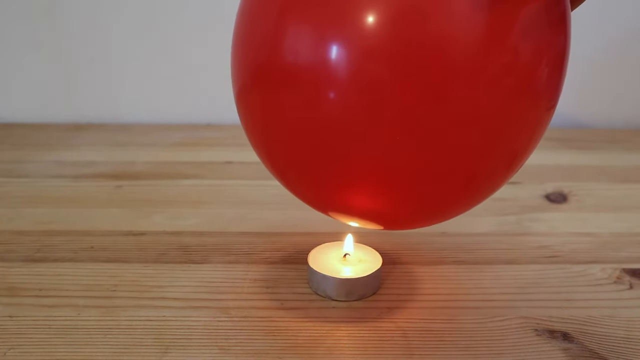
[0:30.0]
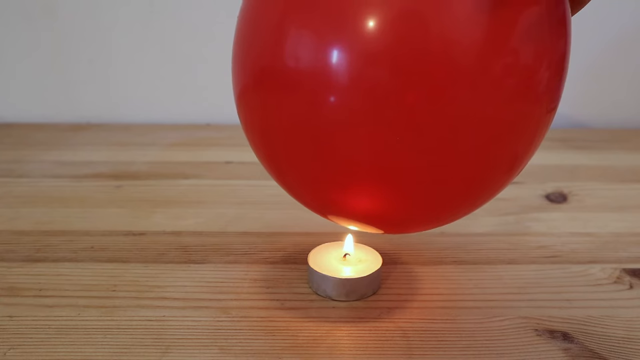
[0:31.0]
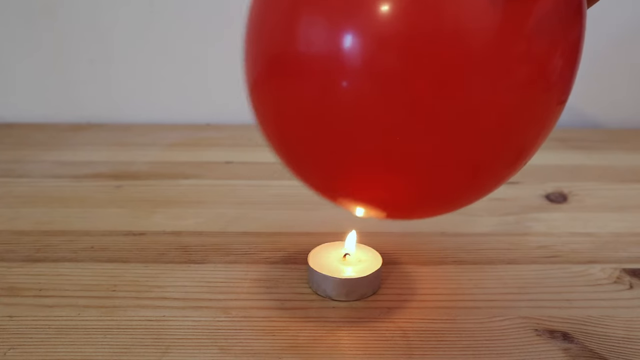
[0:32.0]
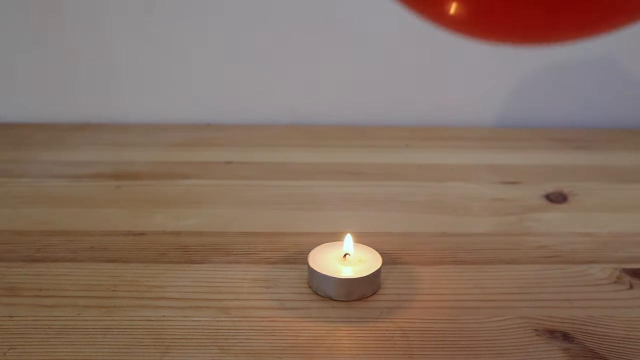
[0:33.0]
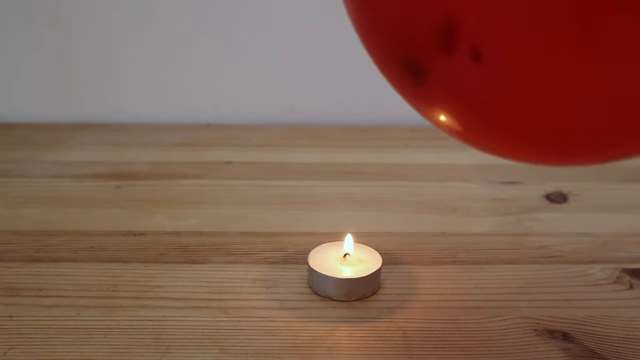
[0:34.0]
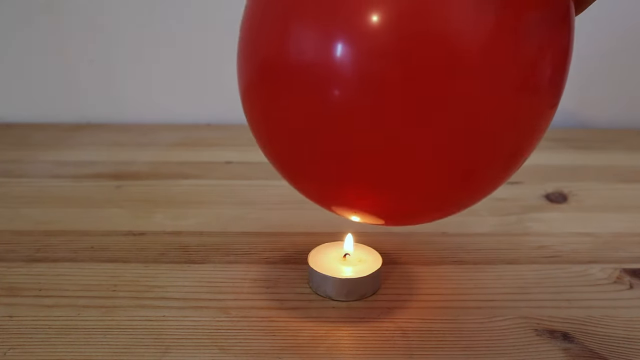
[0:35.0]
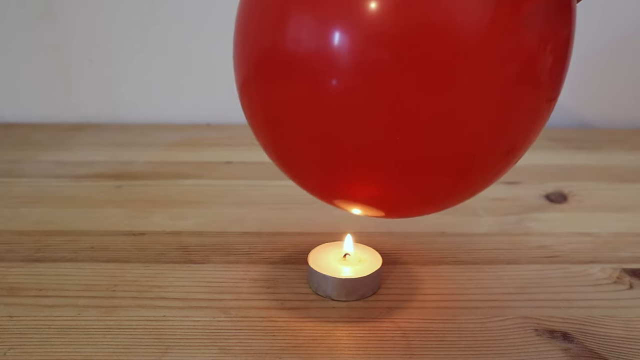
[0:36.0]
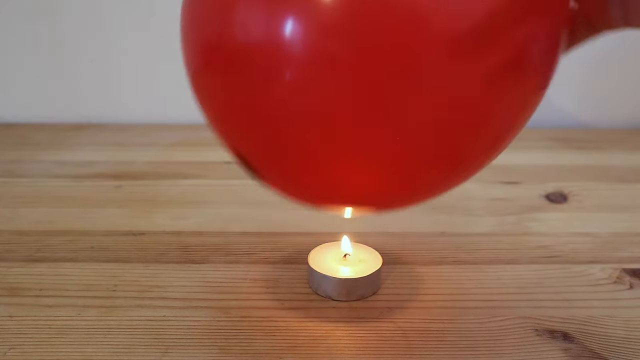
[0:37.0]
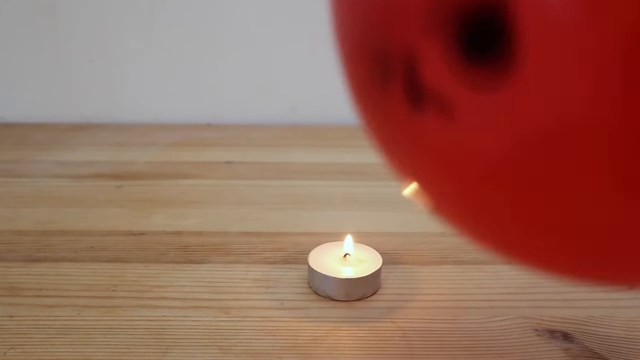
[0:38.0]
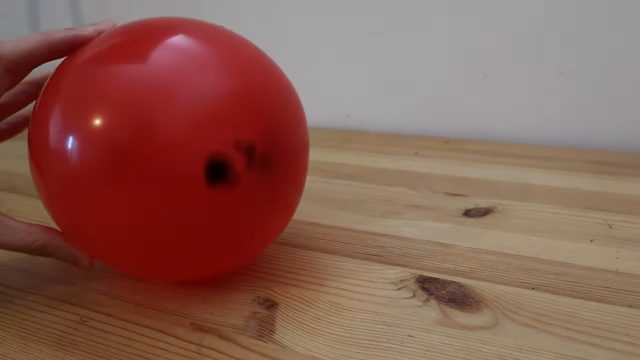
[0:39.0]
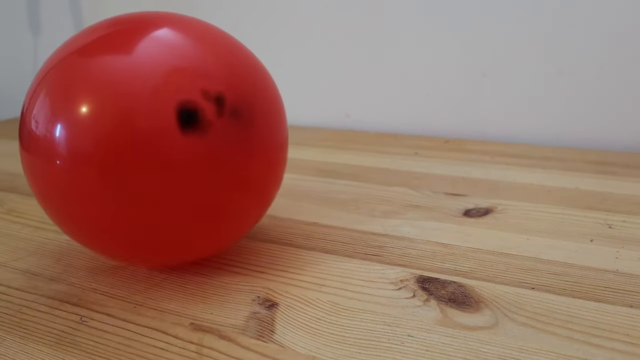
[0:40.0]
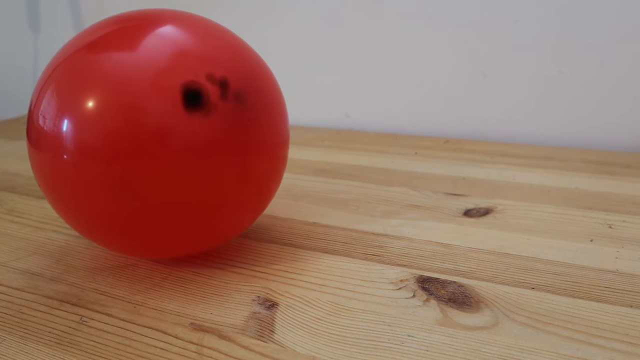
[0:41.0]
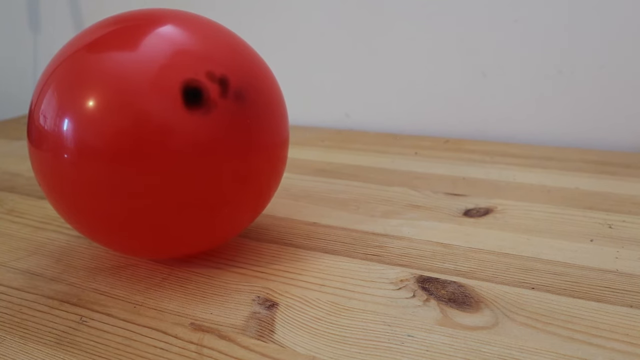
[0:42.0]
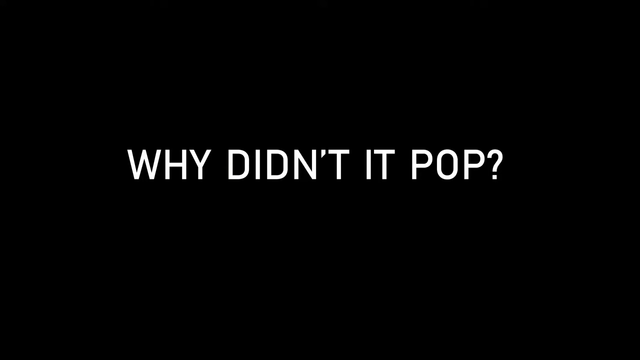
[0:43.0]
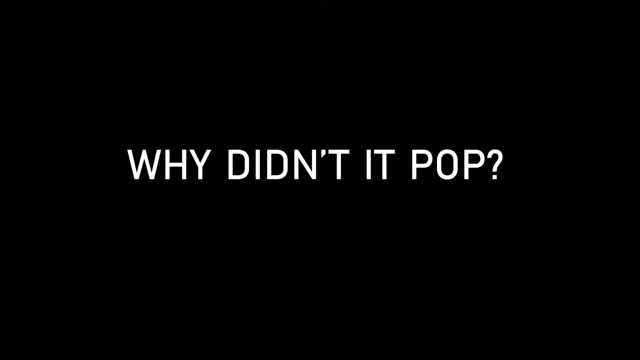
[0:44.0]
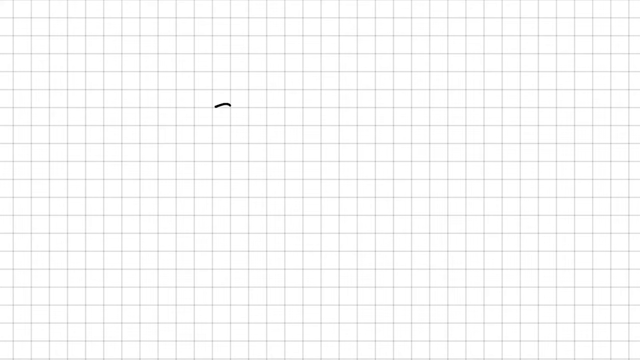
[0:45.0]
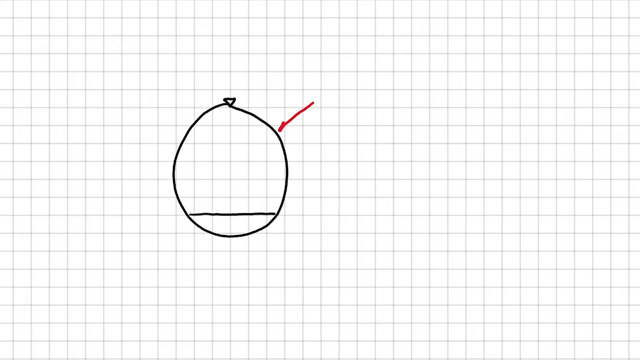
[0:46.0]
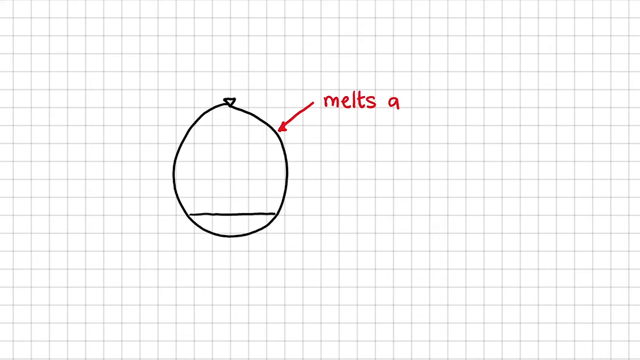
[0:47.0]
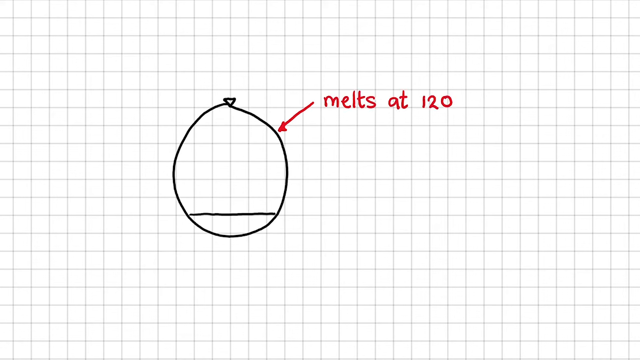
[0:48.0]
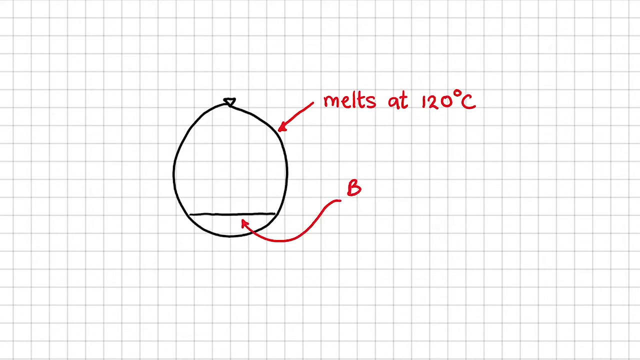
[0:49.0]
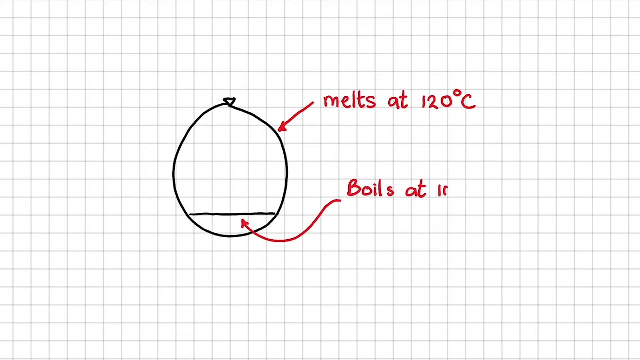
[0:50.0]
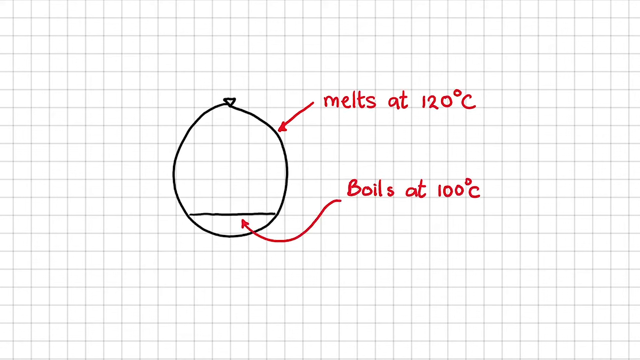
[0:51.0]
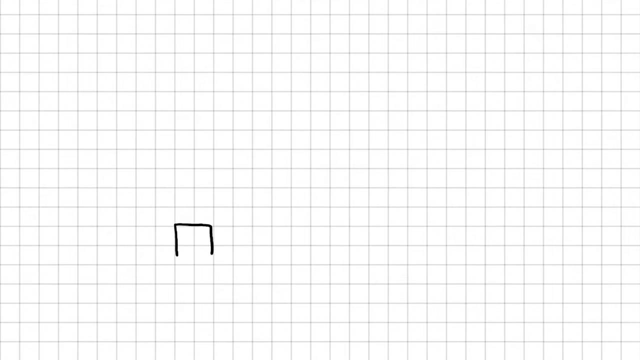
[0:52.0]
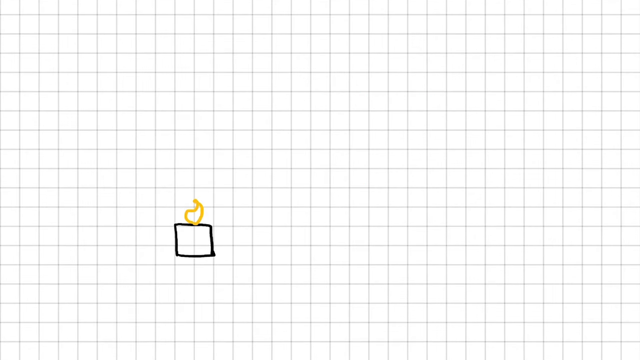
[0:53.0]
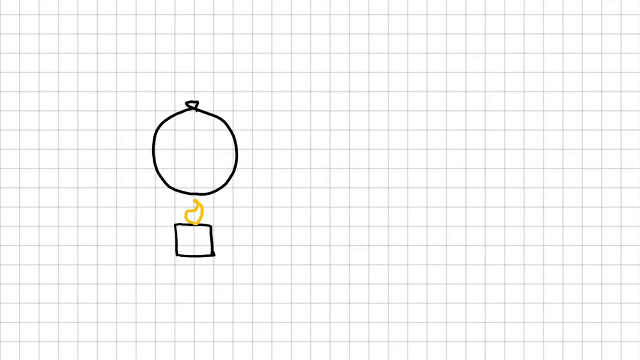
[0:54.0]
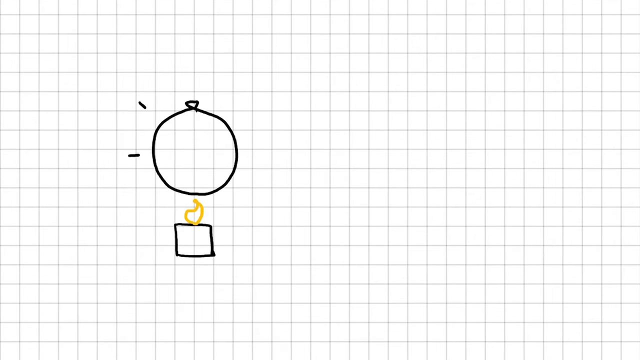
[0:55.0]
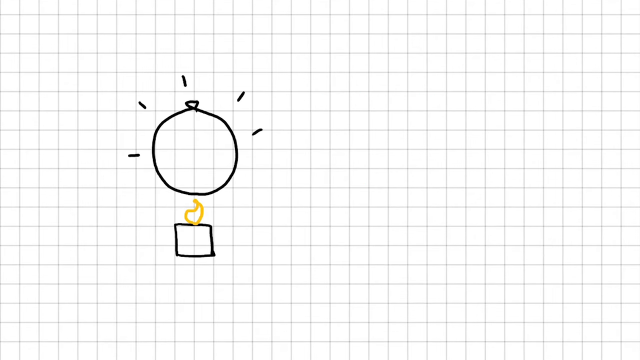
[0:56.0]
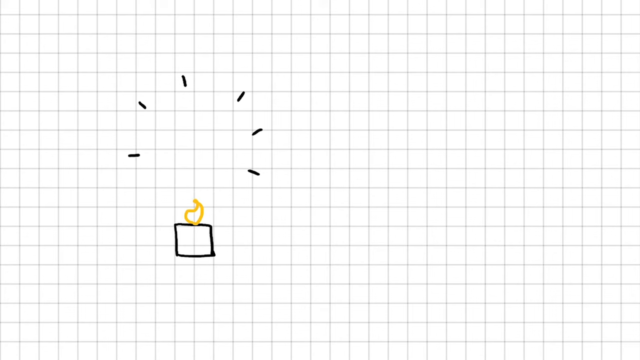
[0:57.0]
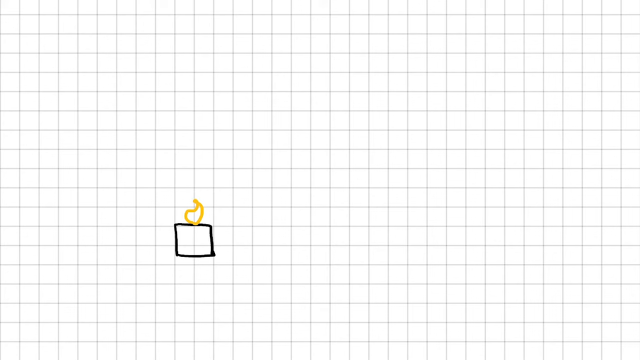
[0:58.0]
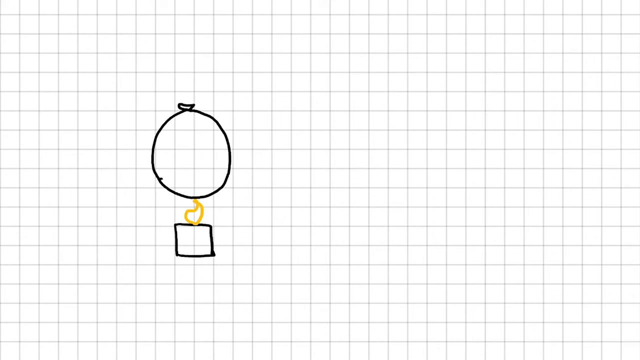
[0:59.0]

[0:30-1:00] With the candle lit, the person holds the red balloon above the flame to test how the balloon with water resists compared to the balloon without water. The balloon does not burst immediately, but smoke marks are left on it. The balloon does not burst, and he places it on the table, where smoke marks are visible on it. The scene switches to a black screen with white text reading "why didn't it pop?". Next, a grid with a white background and black lines appears. In an animation, the person draws the balloon with the water level at the bottom. The first arrow points to the balloon with the text "melt at 120 degrees", and the water level is labeled "burn at 120 degrees". The person then draws a balloon without water and a lit candle at the bottom.